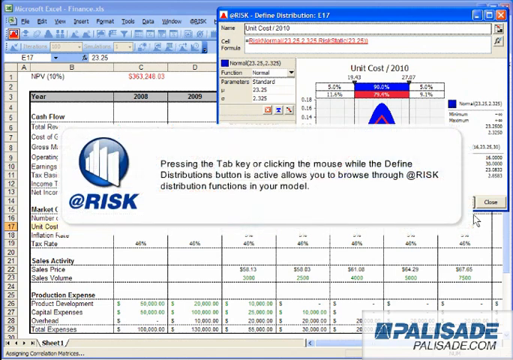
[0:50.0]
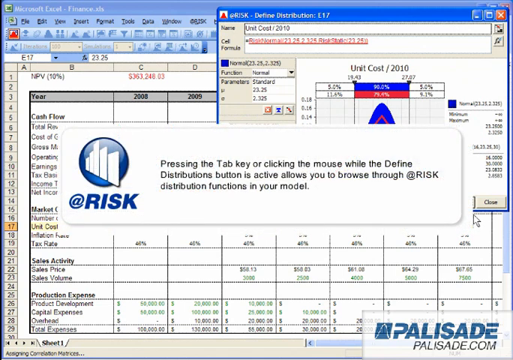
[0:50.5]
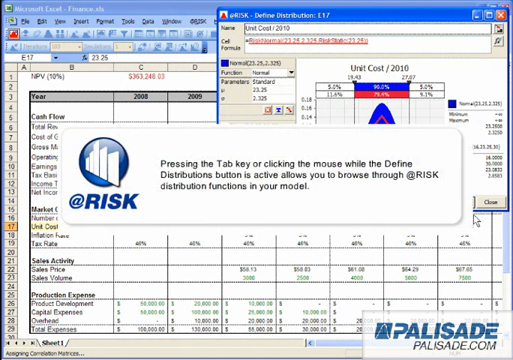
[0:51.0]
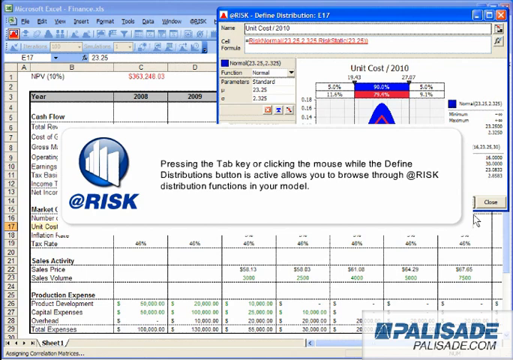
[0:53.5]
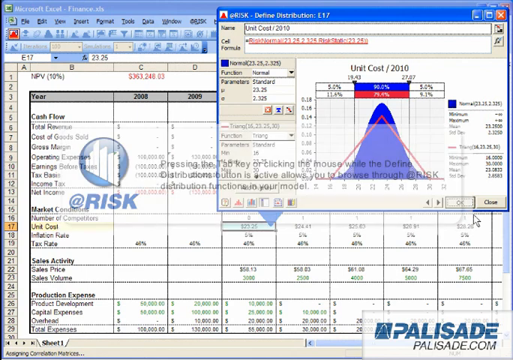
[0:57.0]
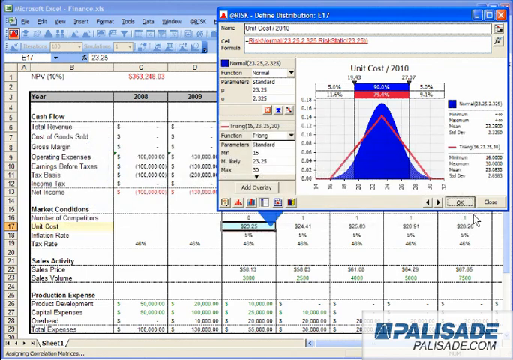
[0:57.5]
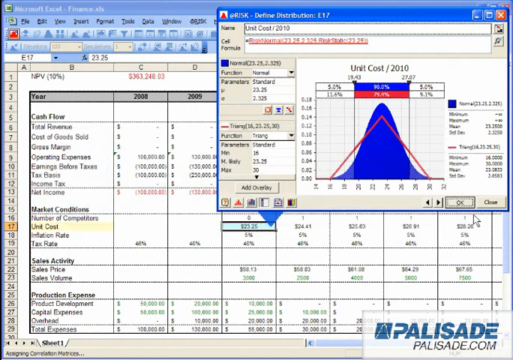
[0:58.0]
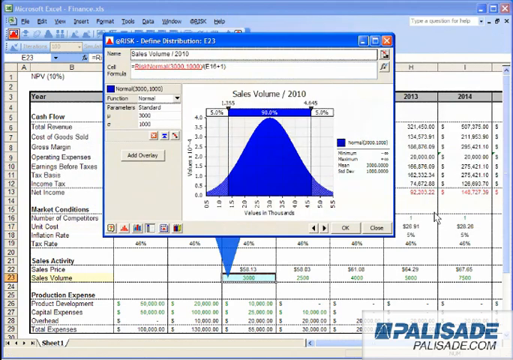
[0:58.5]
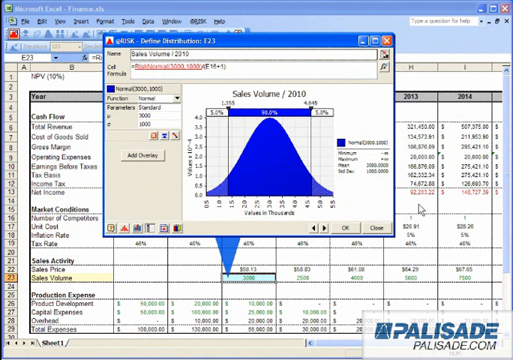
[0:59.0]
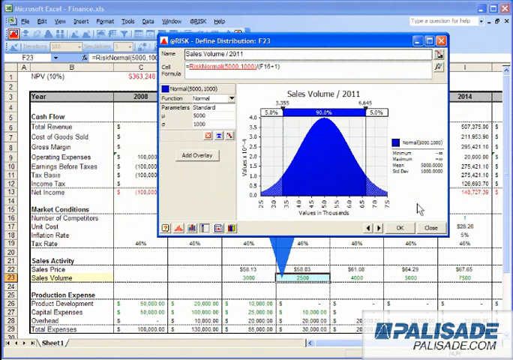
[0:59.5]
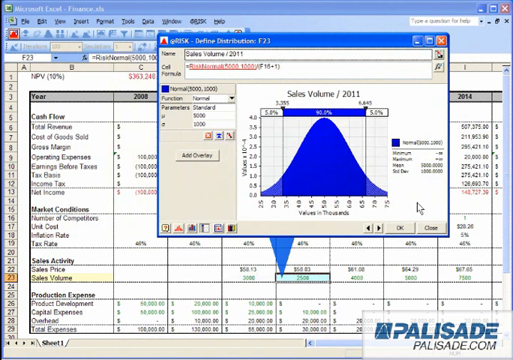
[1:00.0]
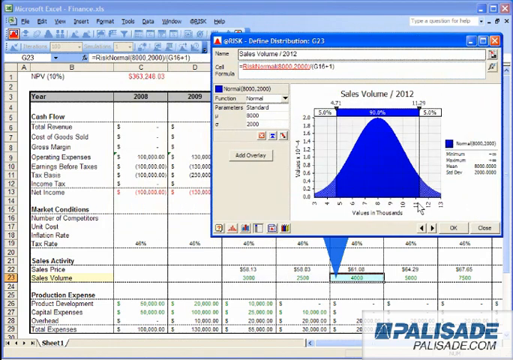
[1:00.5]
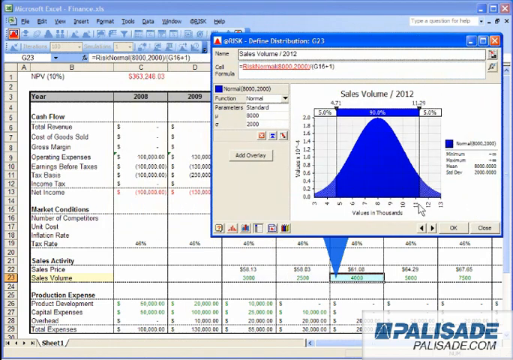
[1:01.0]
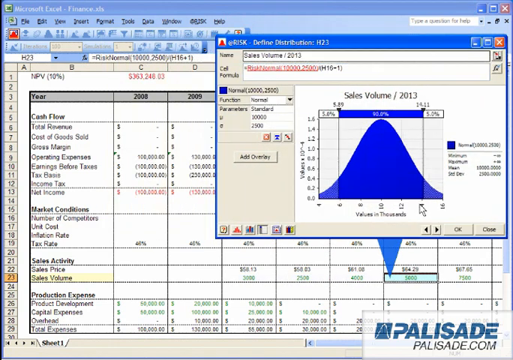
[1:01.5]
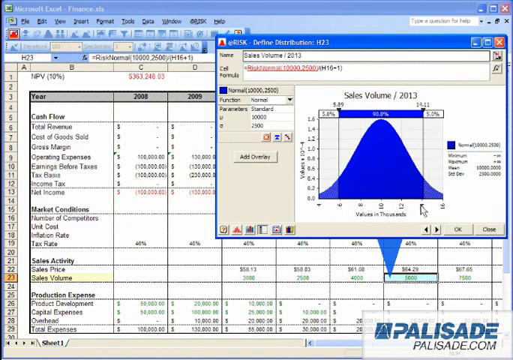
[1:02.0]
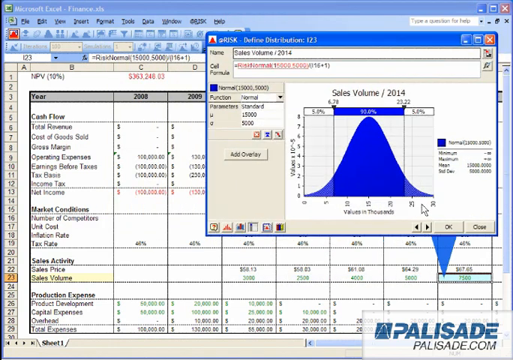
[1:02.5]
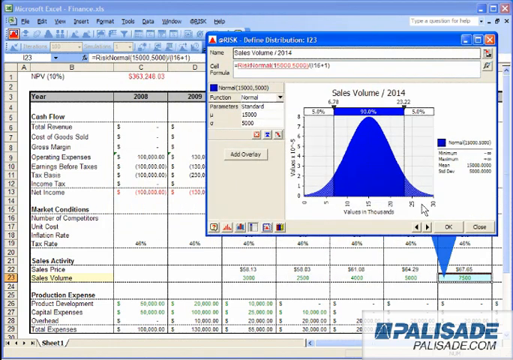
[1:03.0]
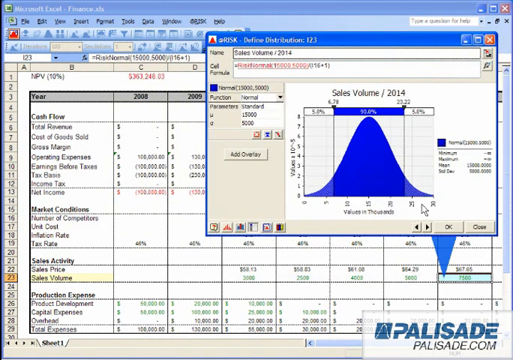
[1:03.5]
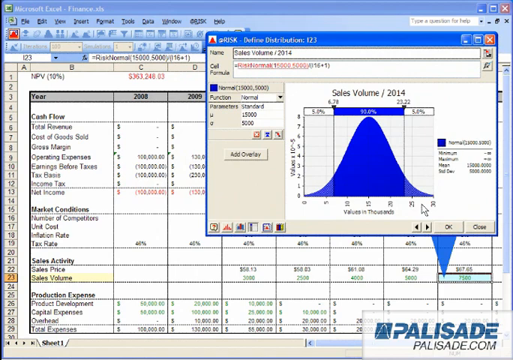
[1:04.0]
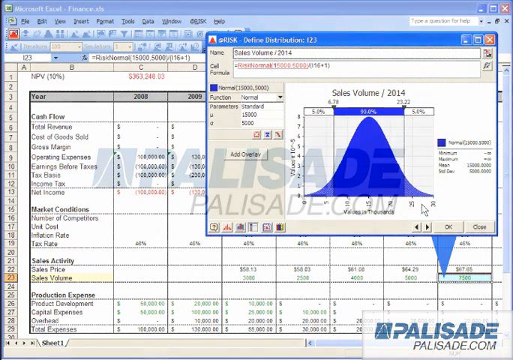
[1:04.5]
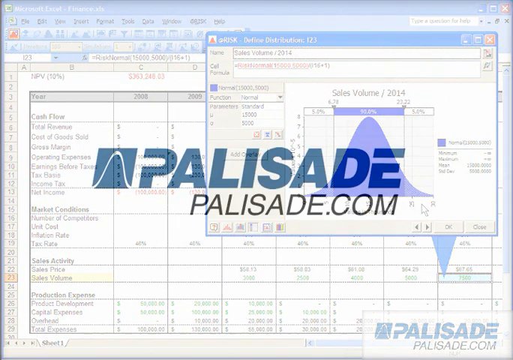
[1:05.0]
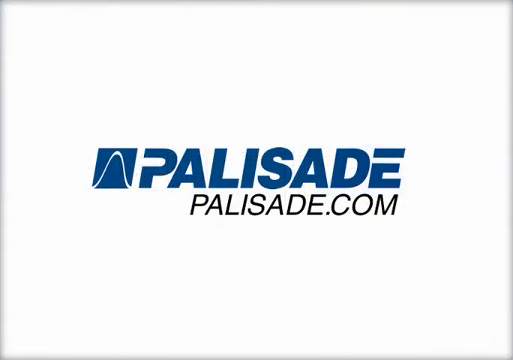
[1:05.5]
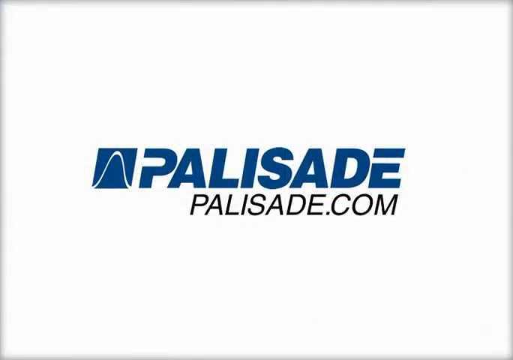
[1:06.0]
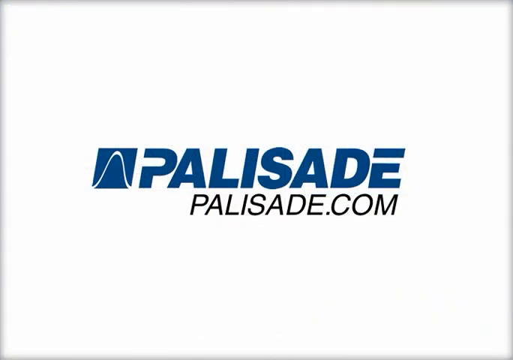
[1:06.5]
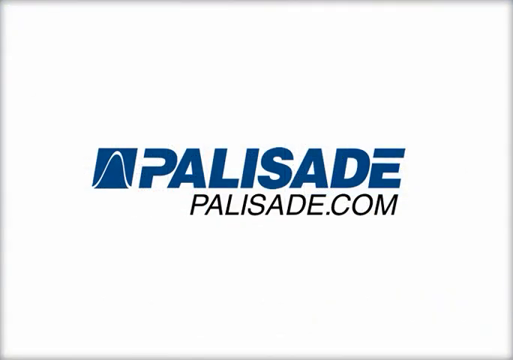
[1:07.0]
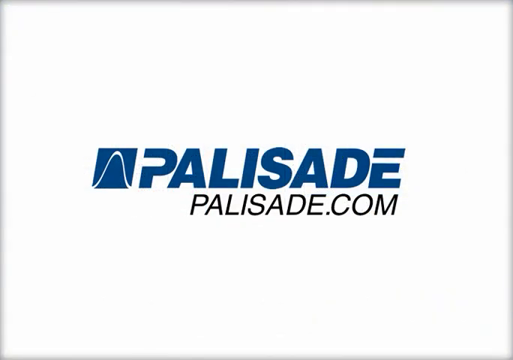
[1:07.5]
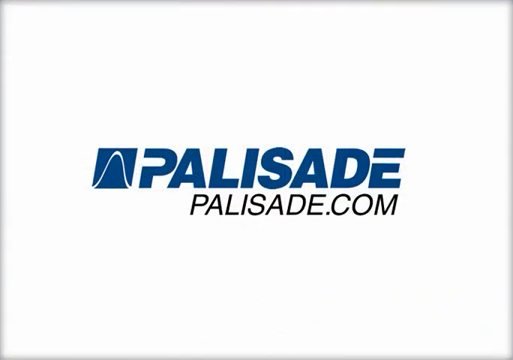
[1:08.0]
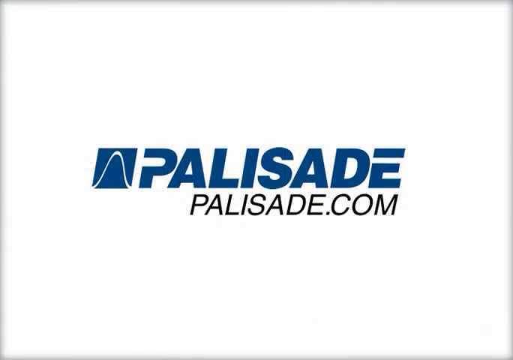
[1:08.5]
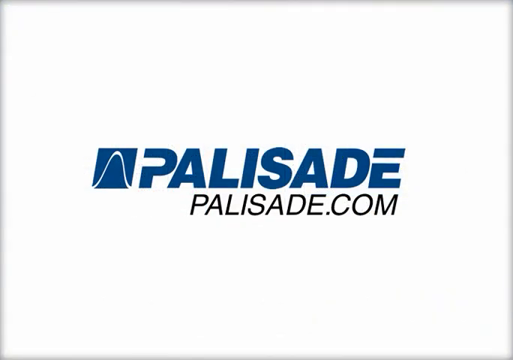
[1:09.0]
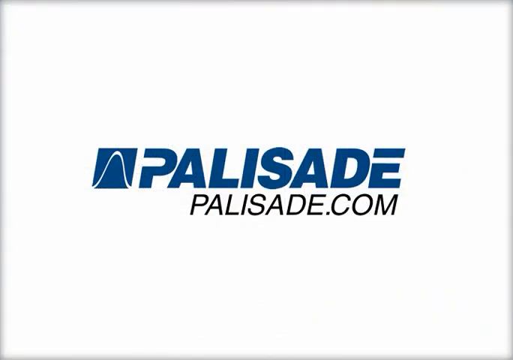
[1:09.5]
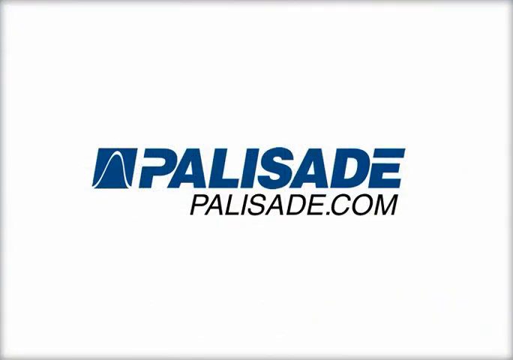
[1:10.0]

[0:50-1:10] The screen recording shows a Microsoft Excel spreadsheet called finance.xls, with cash flow, market and sales activity in the background. Two dialog boxes are popped up over it. One is the risk define distribution pop-up. The other, in front, is a long white rectangle with the blue risk logo with white bars. Underneath is "RISK" in capital blue letters, followed by the text "pressing the tab key or clicking the mouse while the define distributions button is active allows you to browse through risk distribution functions on your model." The screen hangs like that for several seconds, with a Palisade logo at the bottom. The banner then disappears, and the risk dialog box moves around the screen a little. It fades away and a white screen appears showing "PALISADE" in royal blue capital letters with a matching logo beside it, and under that, in much smaller black capital letters, "PALISADE.COM".